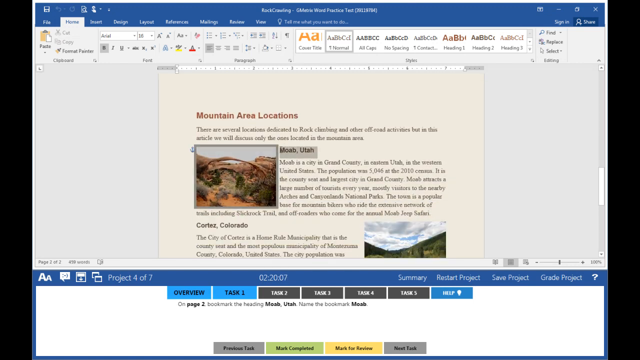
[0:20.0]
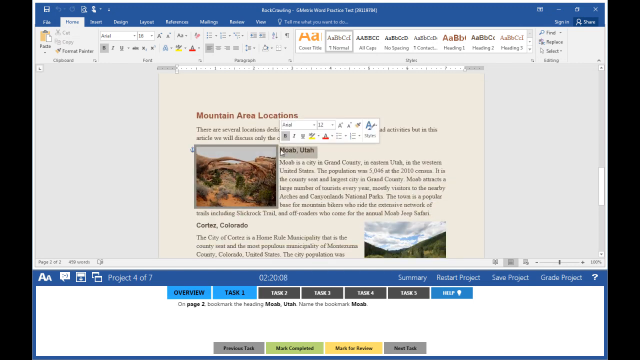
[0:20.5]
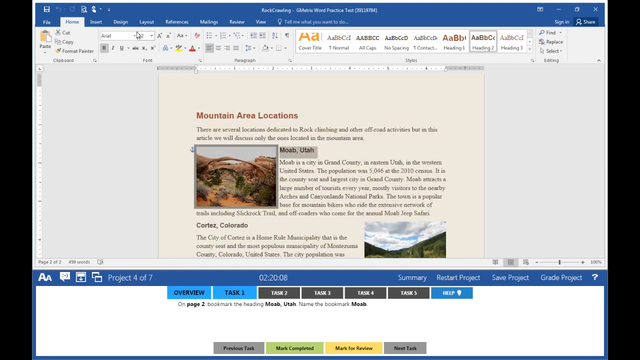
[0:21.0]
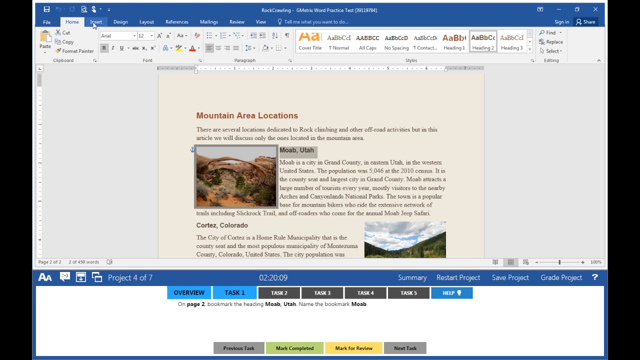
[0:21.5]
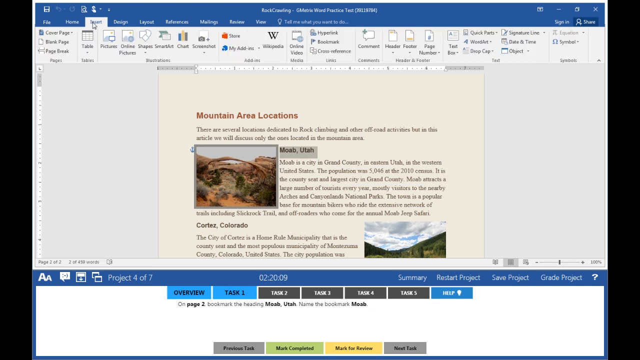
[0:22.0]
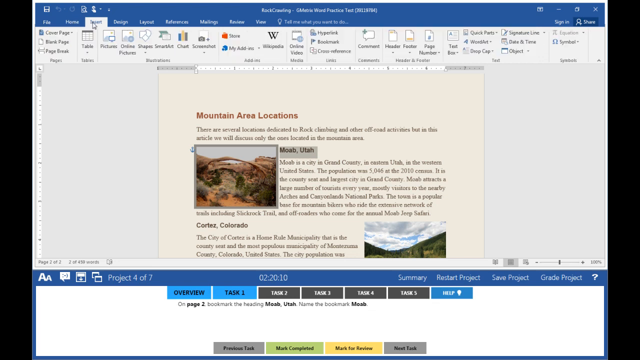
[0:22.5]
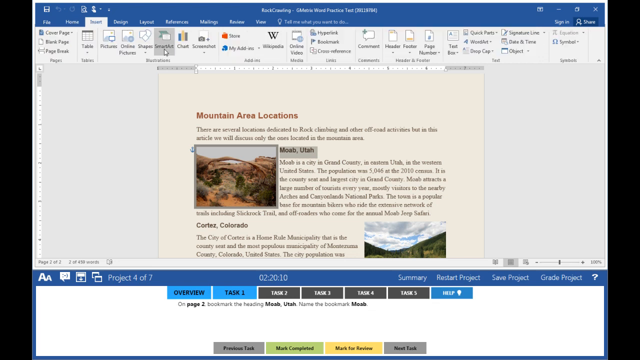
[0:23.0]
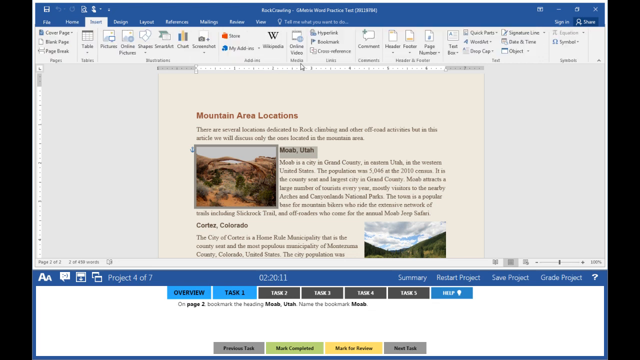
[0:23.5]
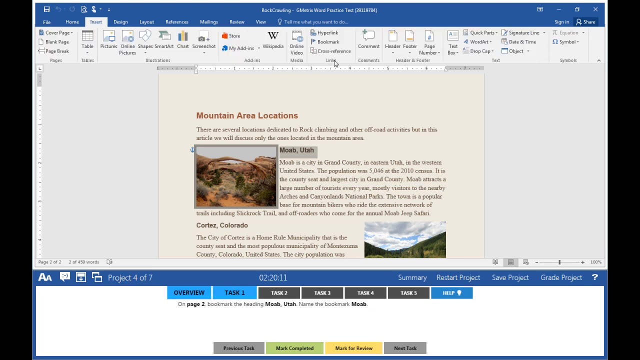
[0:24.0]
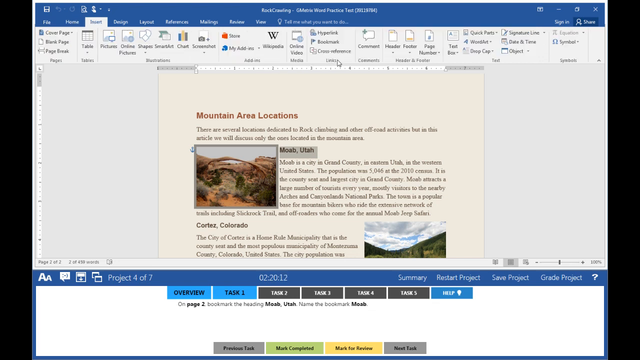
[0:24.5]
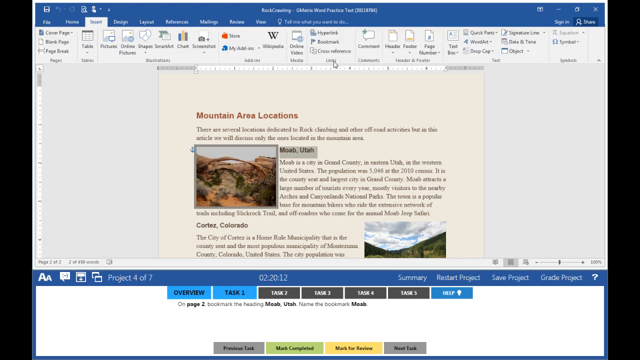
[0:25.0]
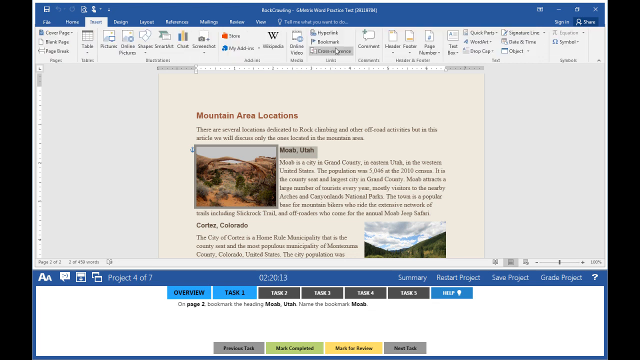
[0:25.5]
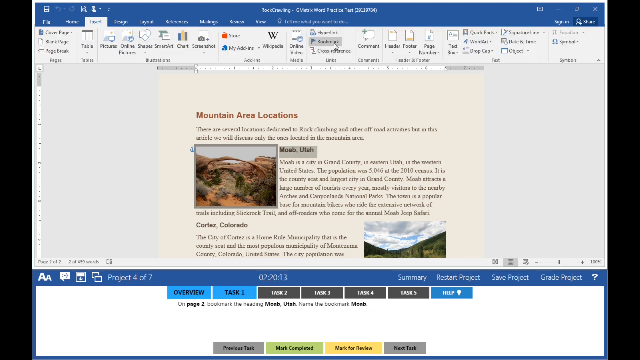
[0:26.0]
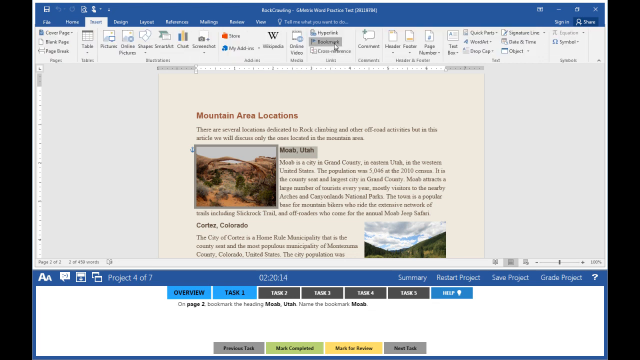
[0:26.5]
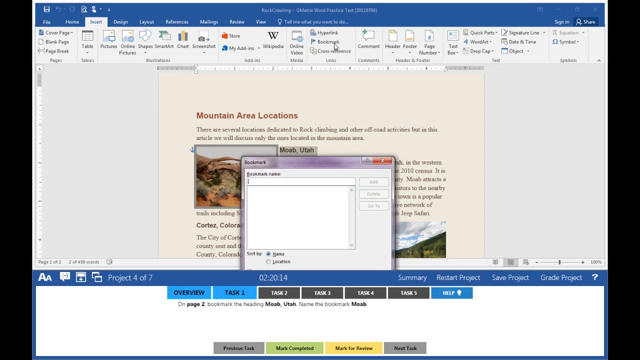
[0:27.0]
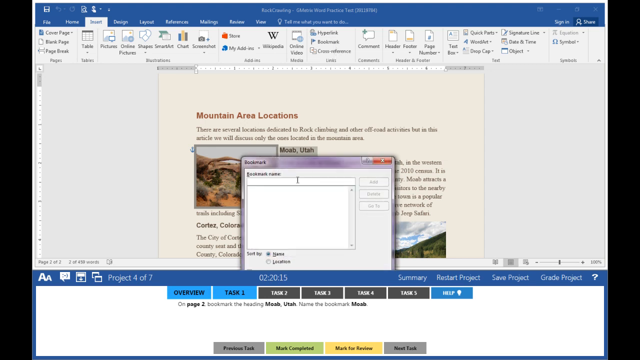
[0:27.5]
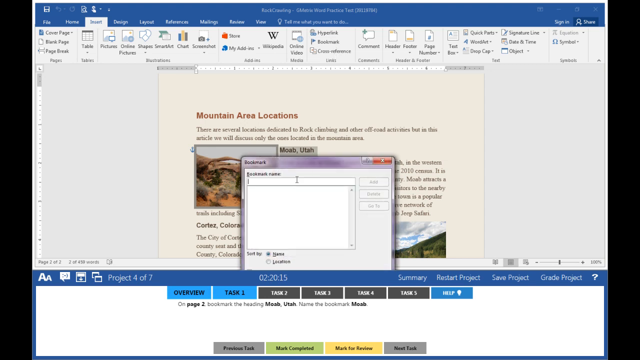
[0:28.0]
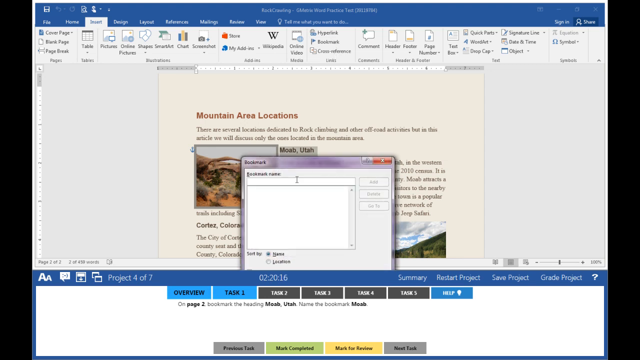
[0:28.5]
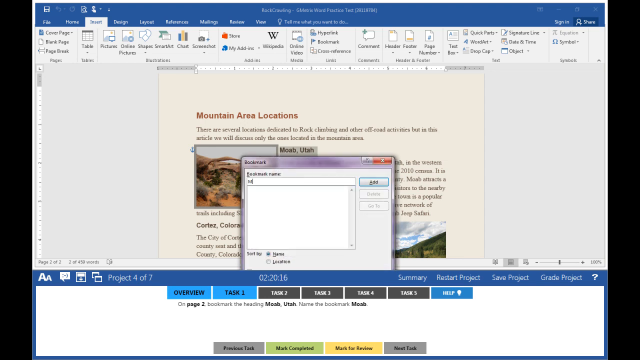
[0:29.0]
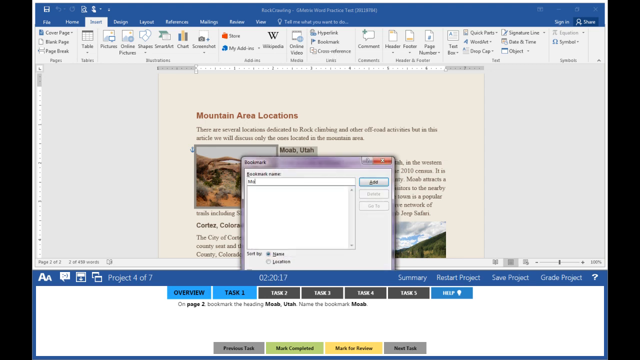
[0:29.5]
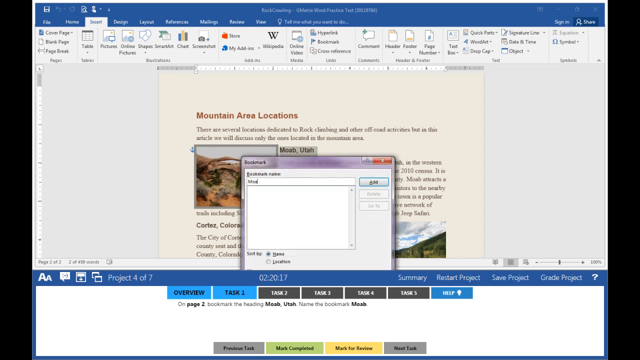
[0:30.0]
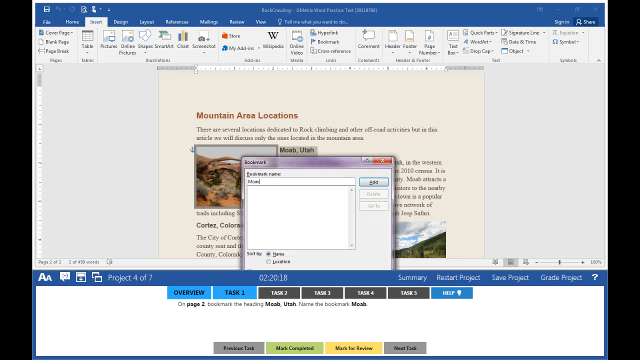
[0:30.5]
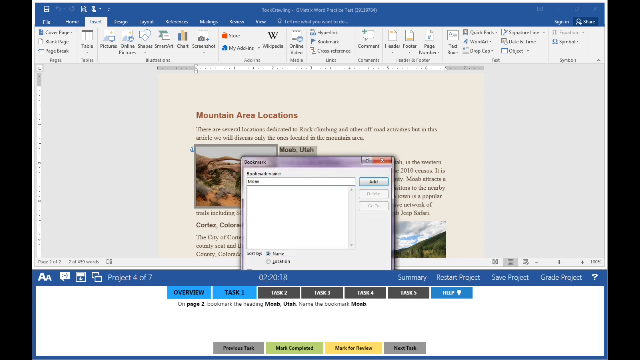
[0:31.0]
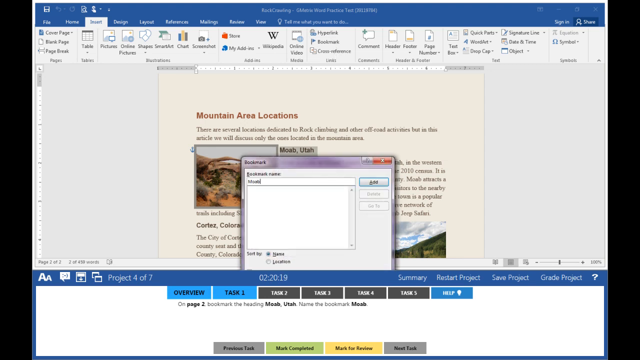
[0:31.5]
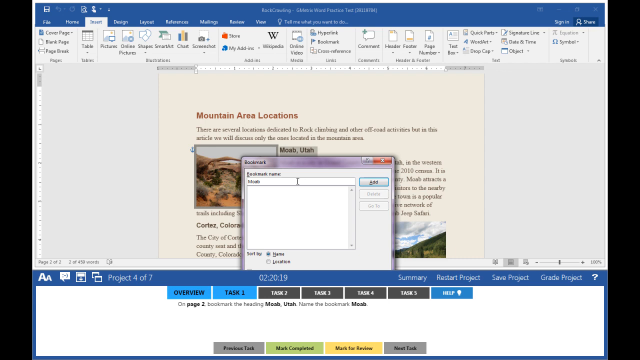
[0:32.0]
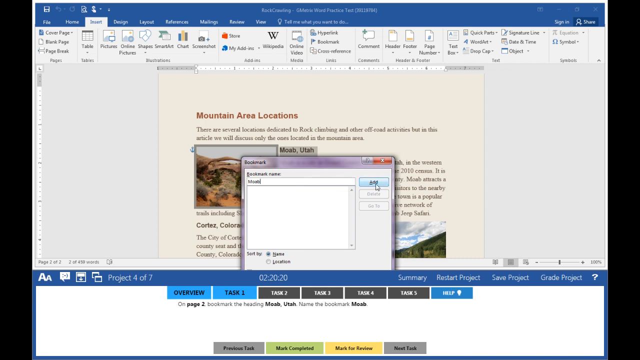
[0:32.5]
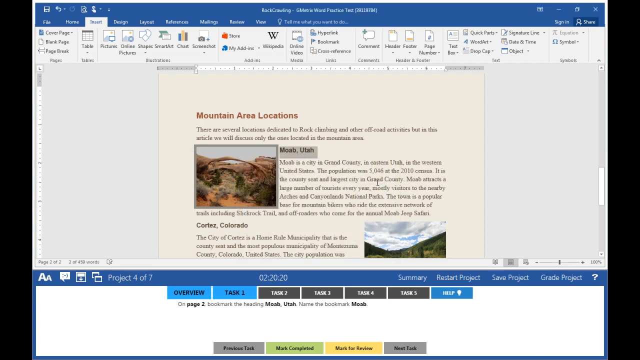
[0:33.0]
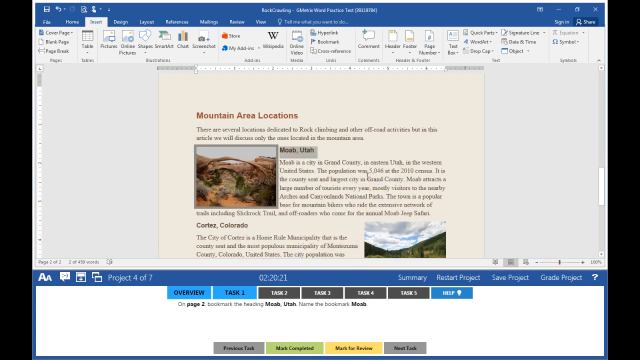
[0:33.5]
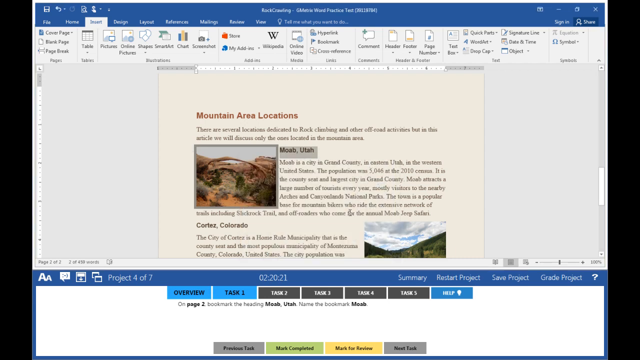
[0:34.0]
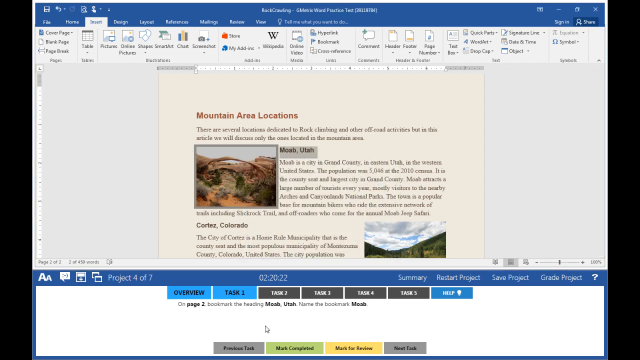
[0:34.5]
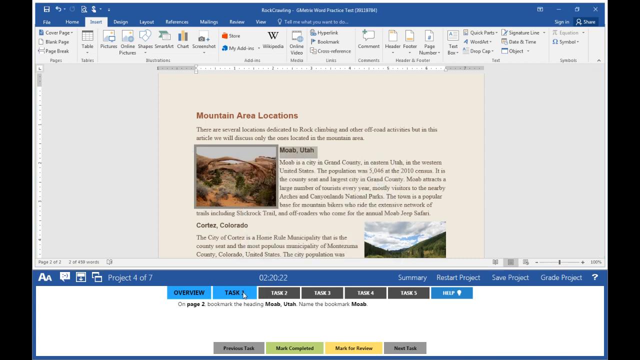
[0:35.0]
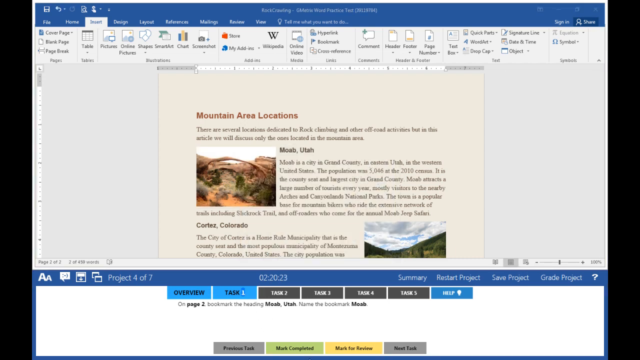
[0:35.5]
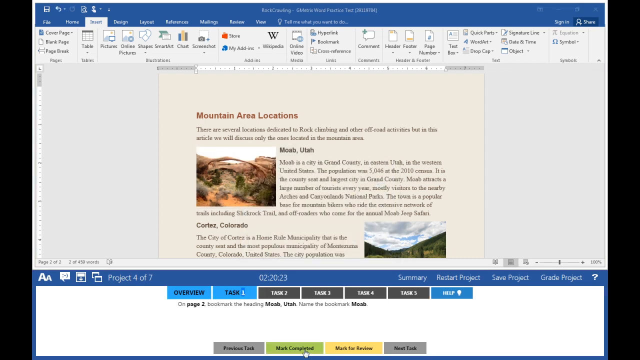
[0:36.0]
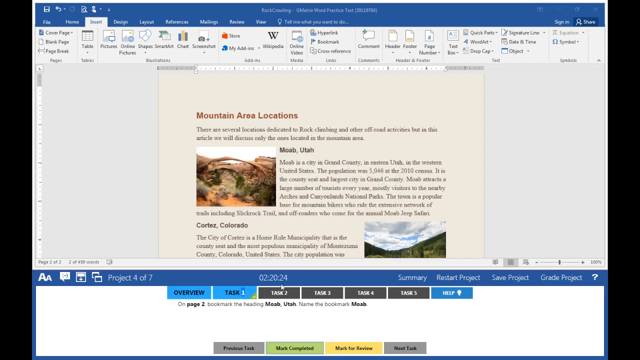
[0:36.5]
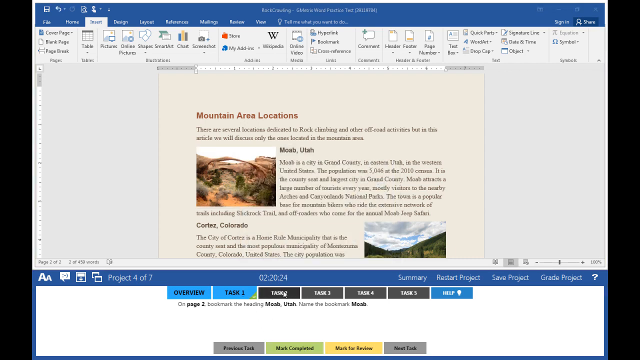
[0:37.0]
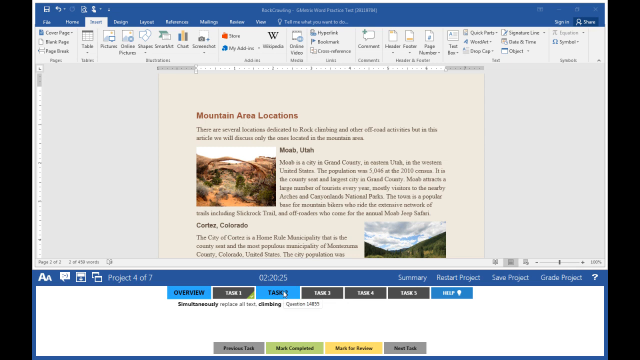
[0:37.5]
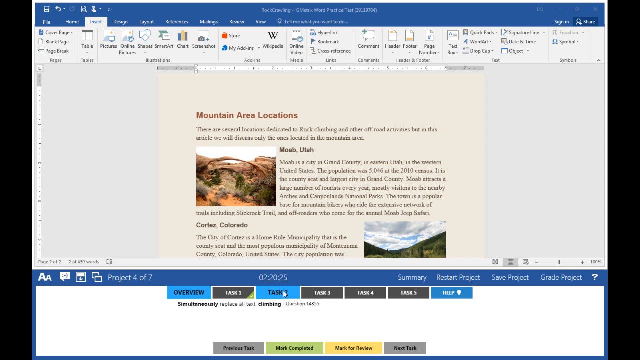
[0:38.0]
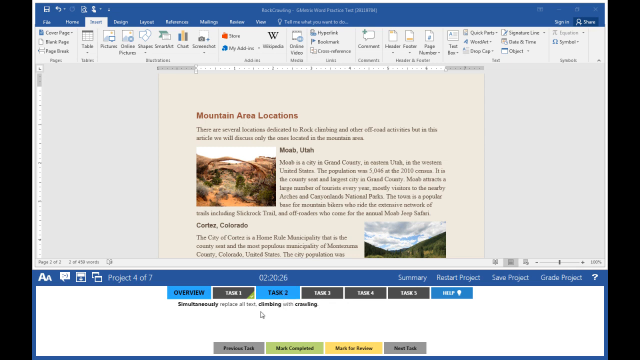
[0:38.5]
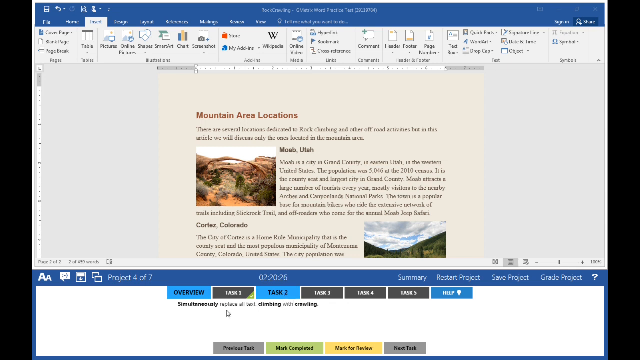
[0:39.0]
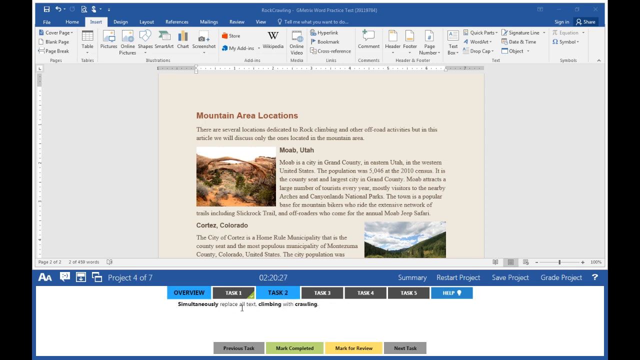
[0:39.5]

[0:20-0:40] A person scrolls down a Word document that seems to be about amenities and things to do in an area that seems to be around Utah. At the top it says "practice test" and "rock crawling practice test"; the top line says "rock crawling," the next one is hard to see and might say "see Moab," and there is also "Word practice test." A section says "mountain area locations," with "Moab, Utah" at the top and "Cortez, Colorado" next. The person highlights Moab, Utah, along with a picture of what looks like some arches. The cursor moves over to links and bookmarks, and they pull up bookmark and bookmark the part about Moab. They then go to task one at the bottom, click on task two, and click back to task one, apparently taking some sort of test.